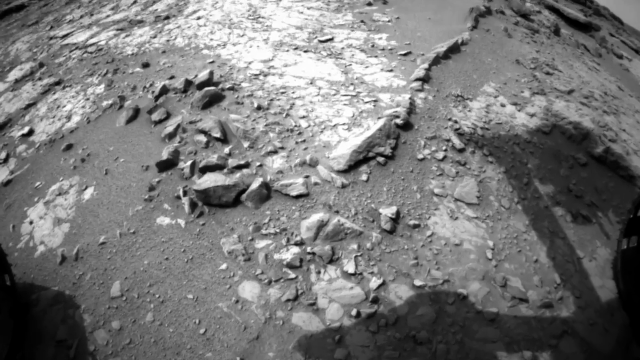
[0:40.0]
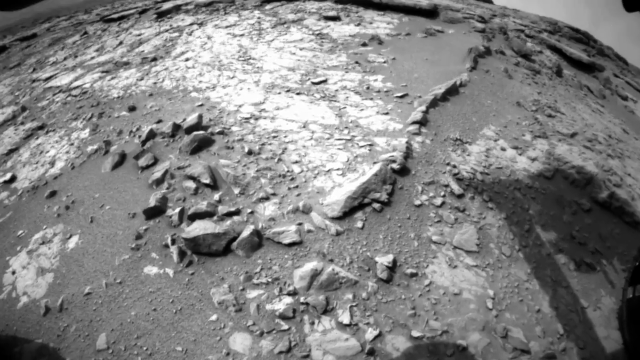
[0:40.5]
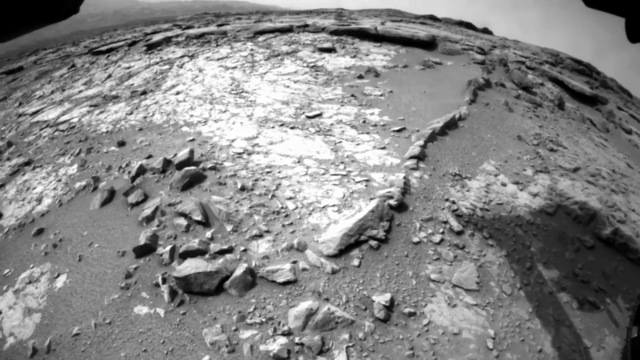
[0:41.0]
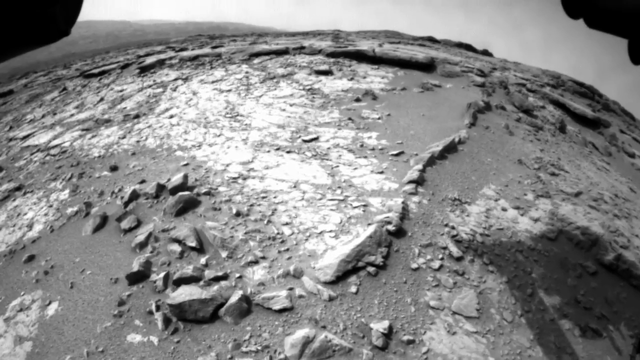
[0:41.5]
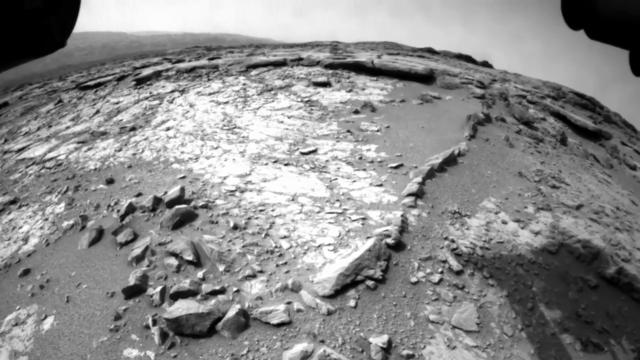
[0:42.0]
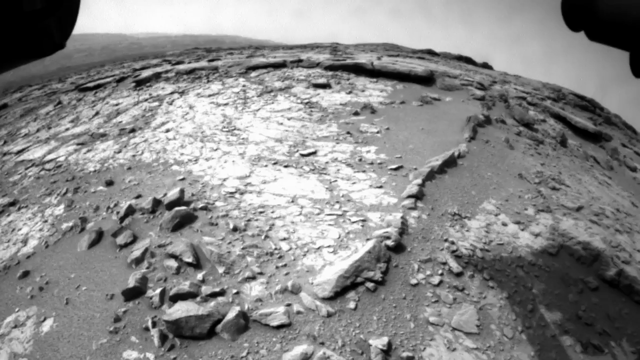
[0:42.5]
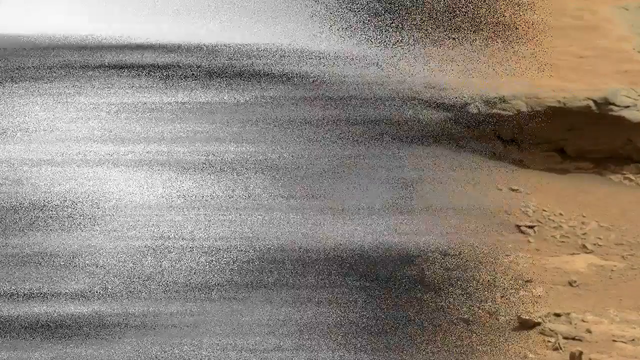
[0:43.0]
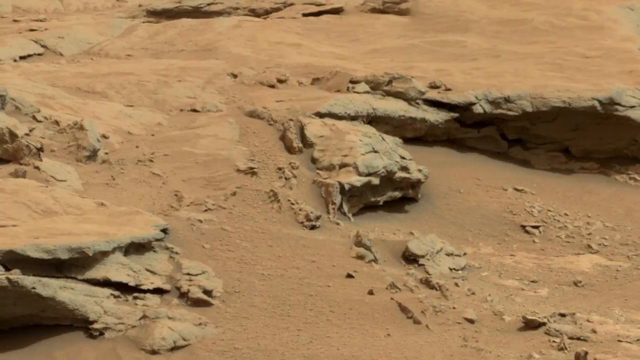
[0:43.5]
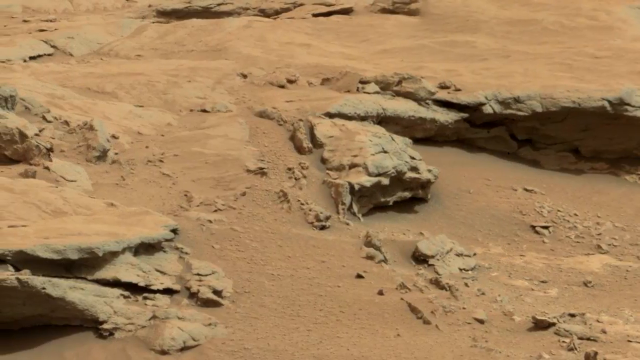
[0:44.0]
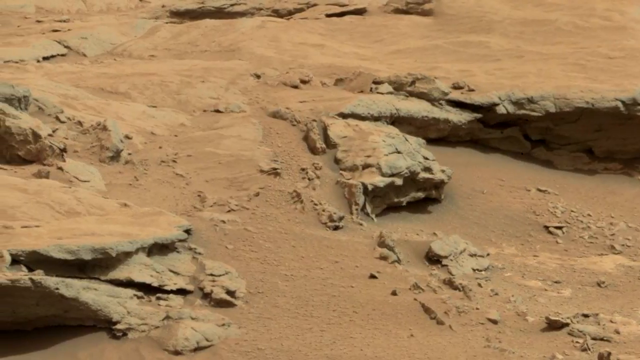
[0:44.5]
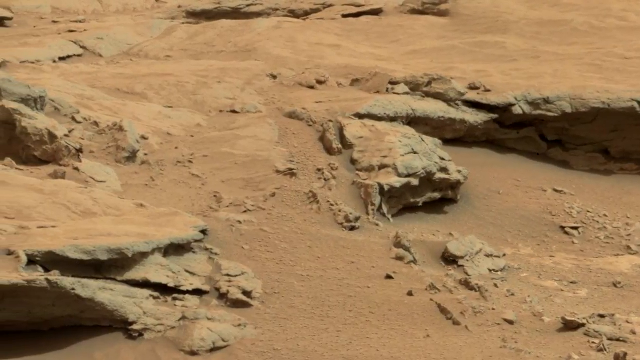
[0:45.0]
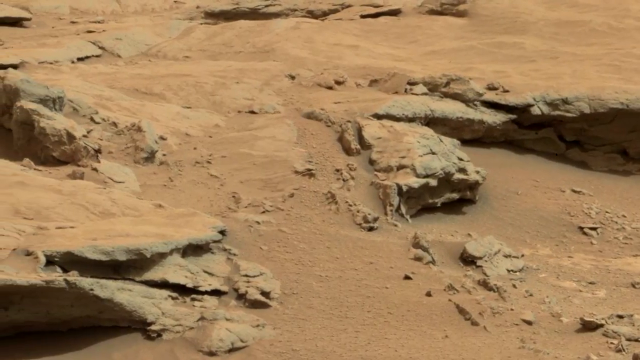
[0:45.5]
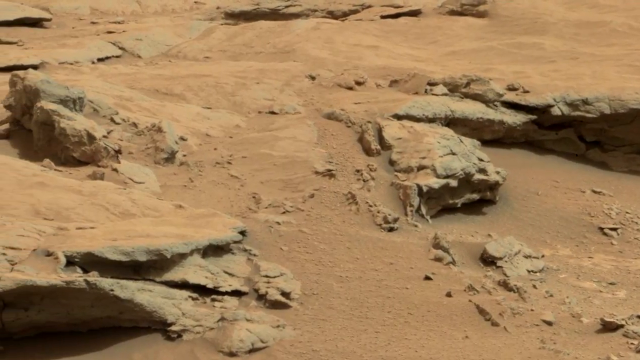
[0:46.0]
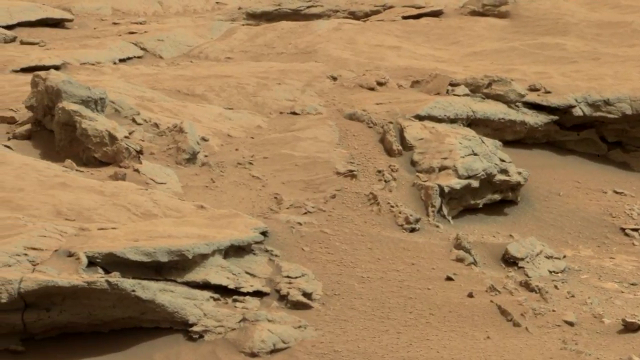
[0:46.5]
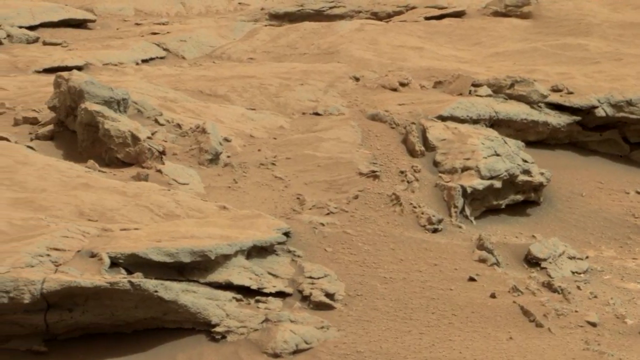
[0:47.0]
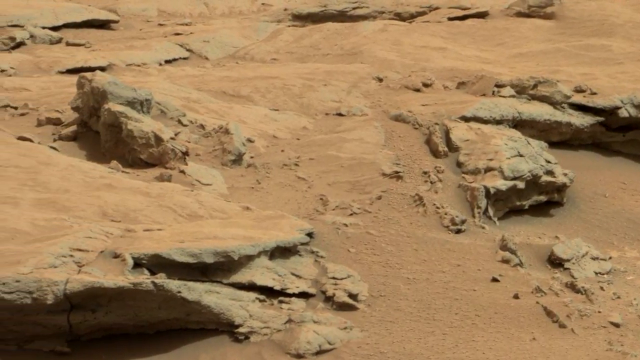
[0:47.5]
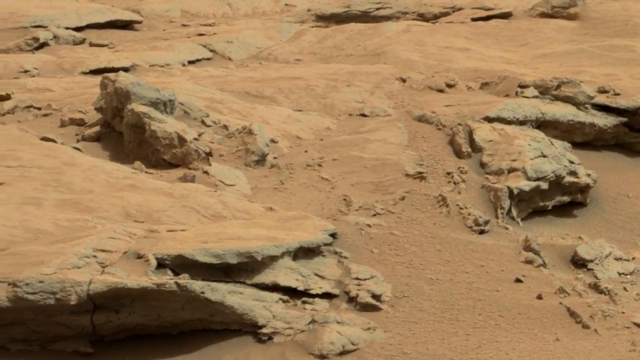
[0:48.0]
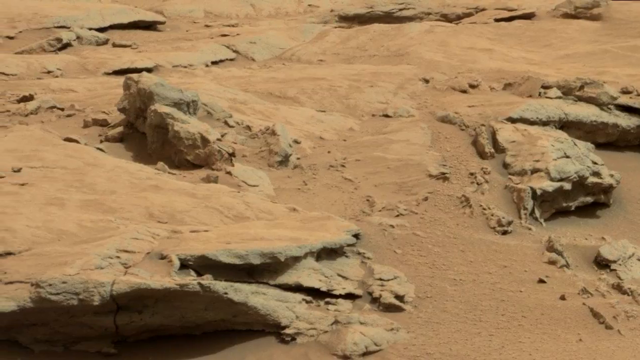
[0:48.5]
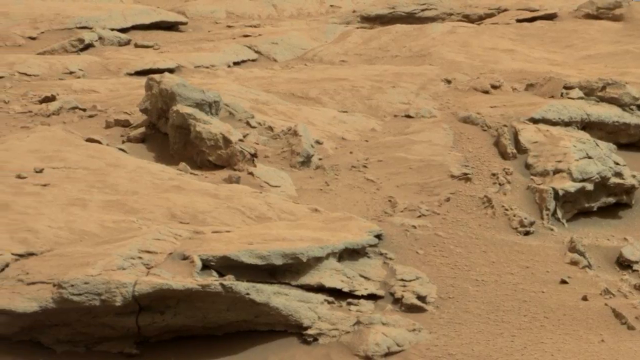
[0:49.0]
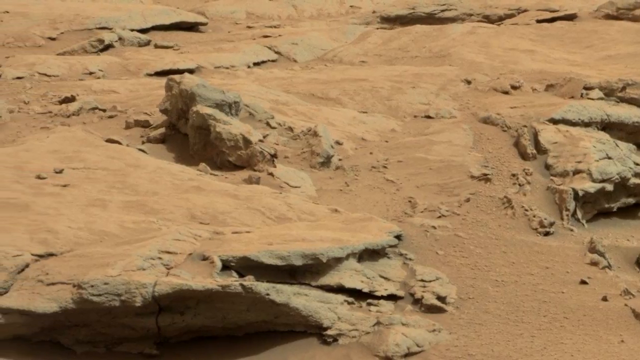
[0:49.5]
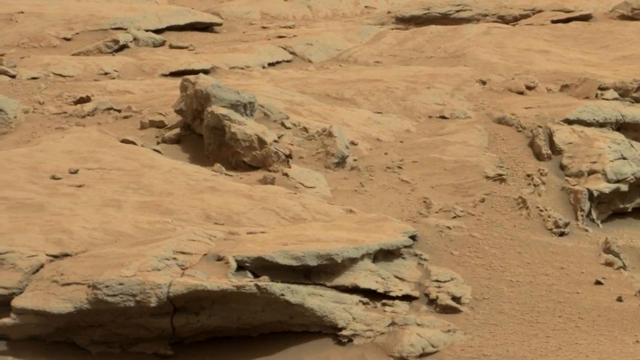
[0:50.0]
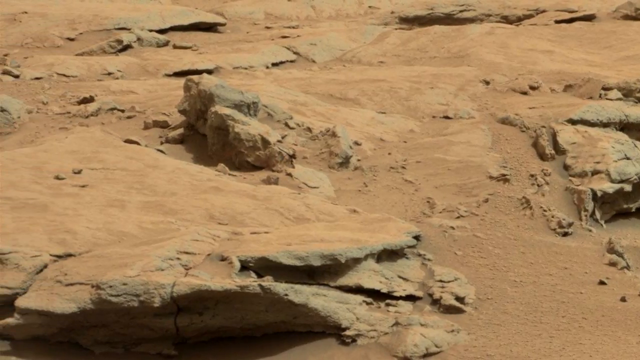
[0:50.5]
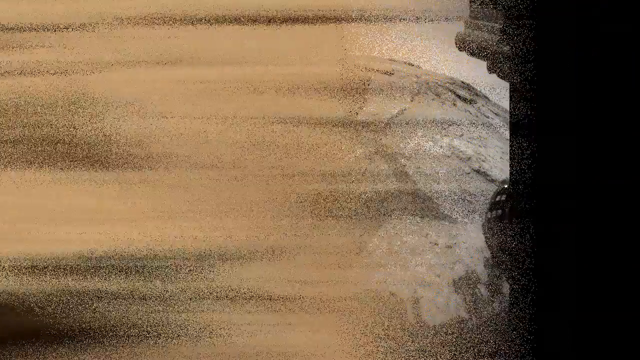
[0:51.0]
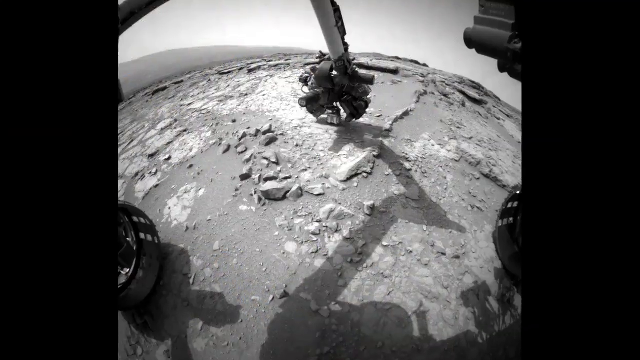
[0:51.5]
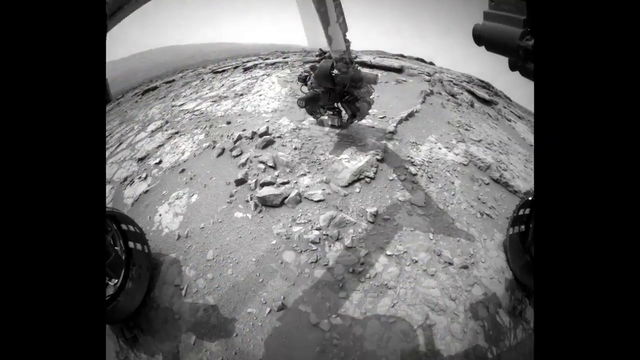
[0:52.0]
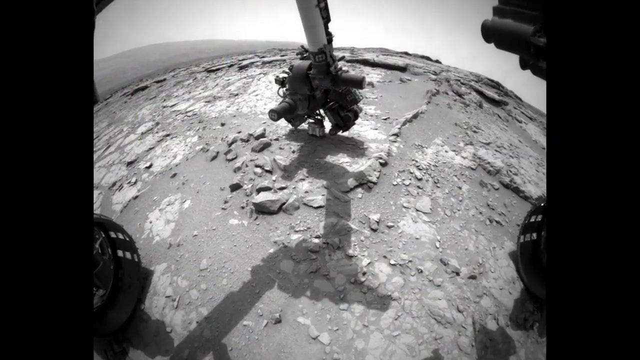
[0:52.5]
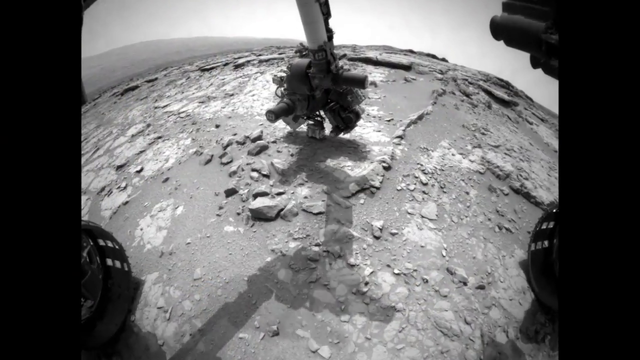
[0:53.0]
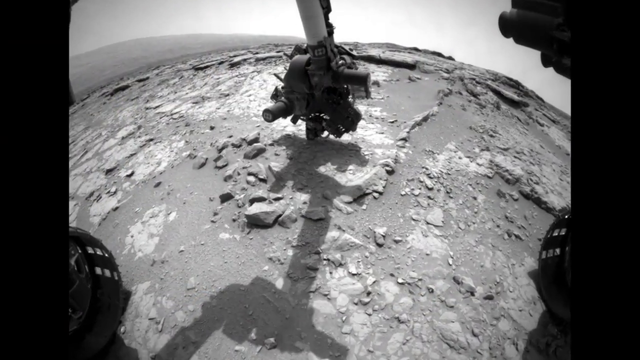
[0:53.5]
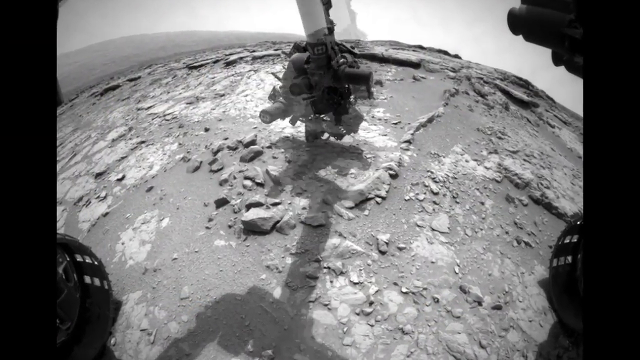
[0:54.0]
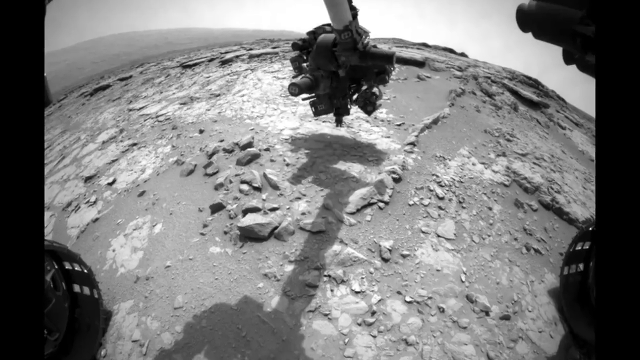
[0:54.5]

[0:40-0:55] A black-and-white picture of the Martian surface shows a lot of rocks, some appearing darker and some lighter, with a lot of sand on them. The video then apparently shows how the rover takes pictures: it has a huge arm with what is possibly a bunch of cameras on it, labeled with the number 8. There are different poles and a lot of cylinders on the hand, with the camera apparently in the middle. The shots go by very fast.